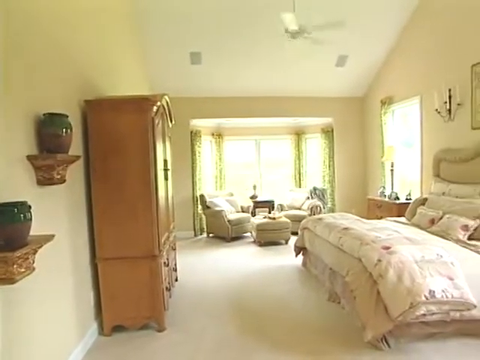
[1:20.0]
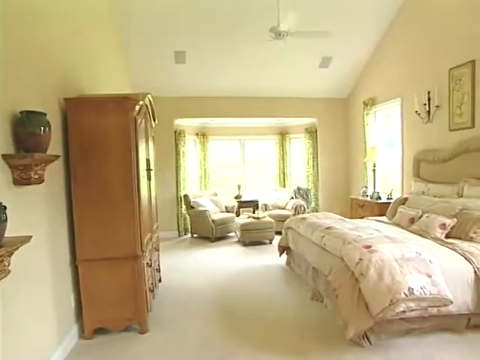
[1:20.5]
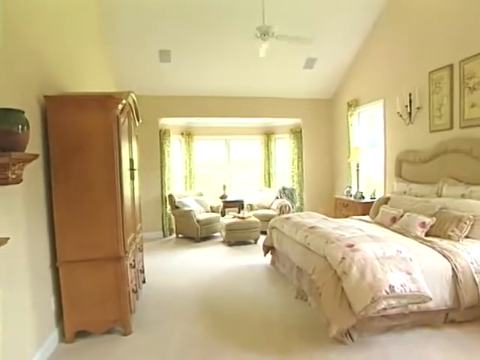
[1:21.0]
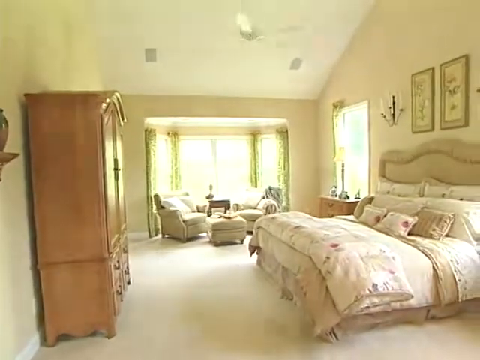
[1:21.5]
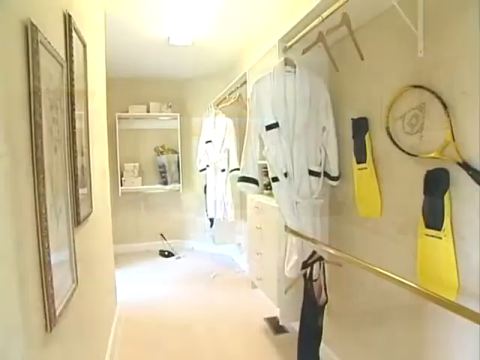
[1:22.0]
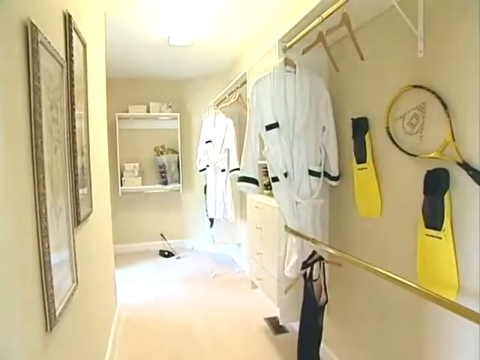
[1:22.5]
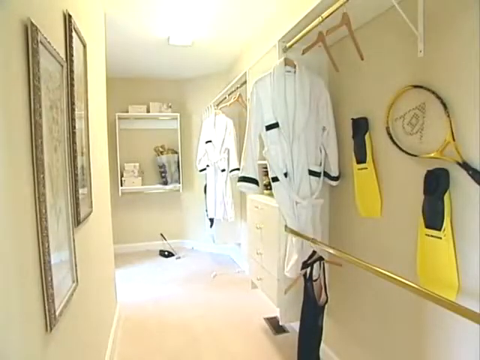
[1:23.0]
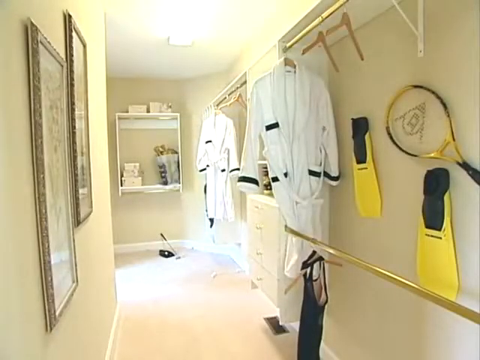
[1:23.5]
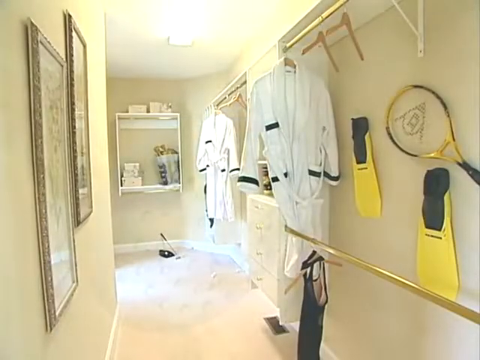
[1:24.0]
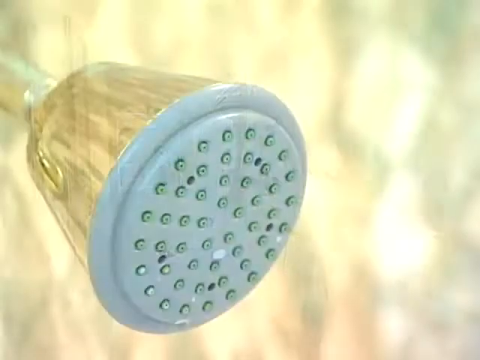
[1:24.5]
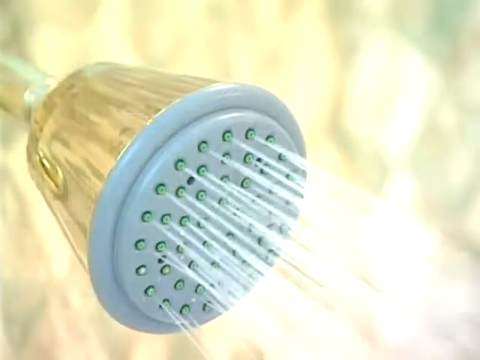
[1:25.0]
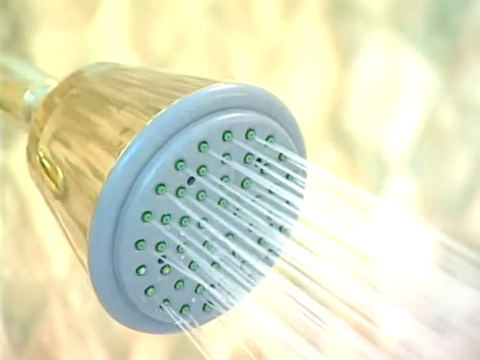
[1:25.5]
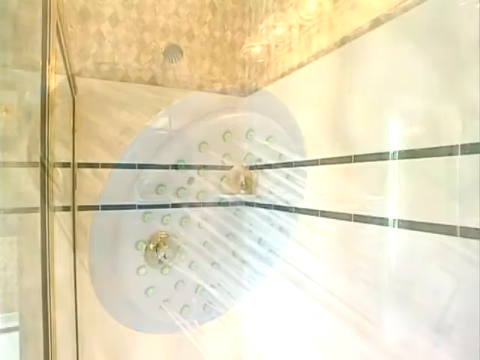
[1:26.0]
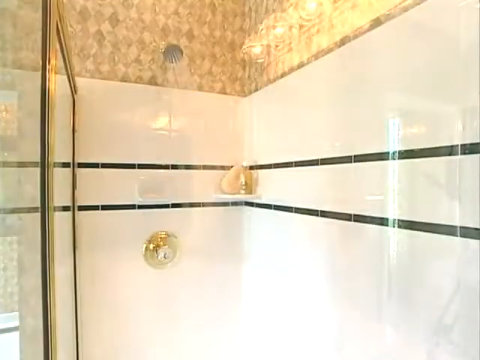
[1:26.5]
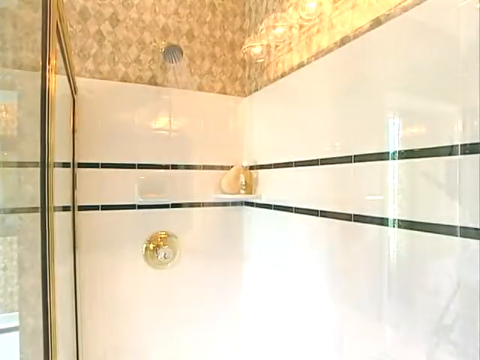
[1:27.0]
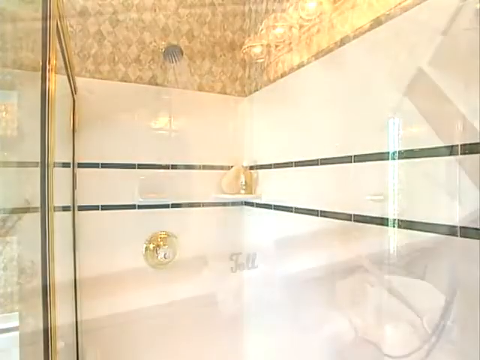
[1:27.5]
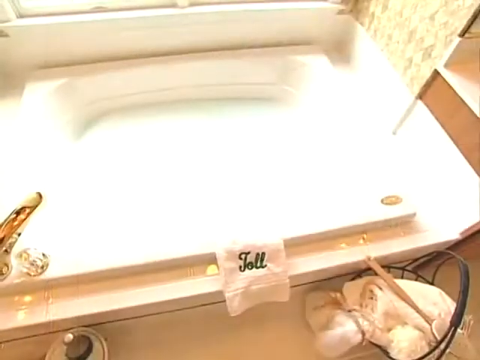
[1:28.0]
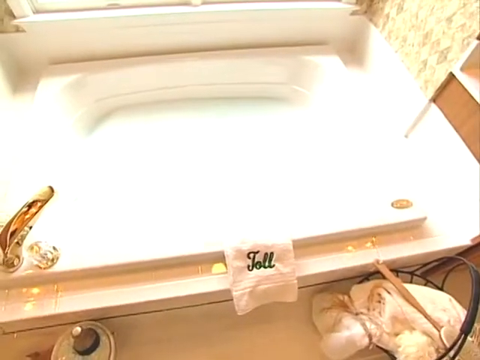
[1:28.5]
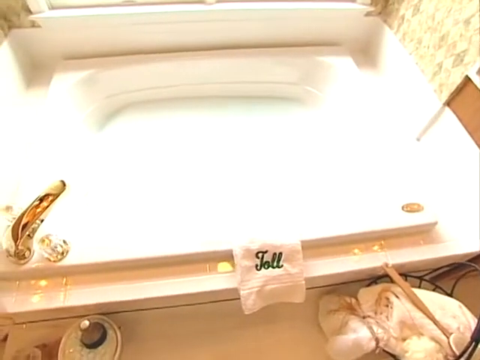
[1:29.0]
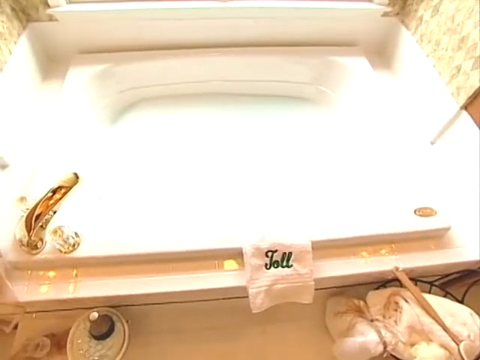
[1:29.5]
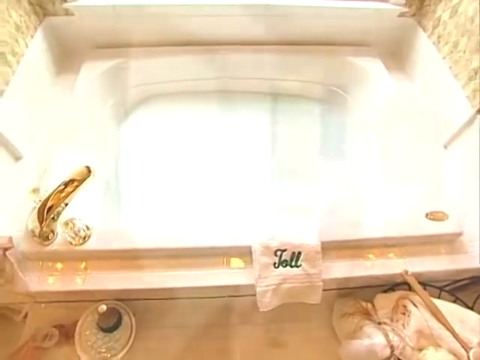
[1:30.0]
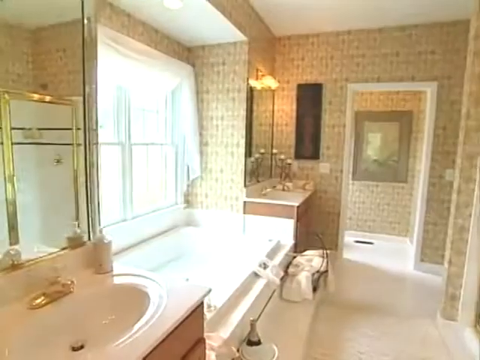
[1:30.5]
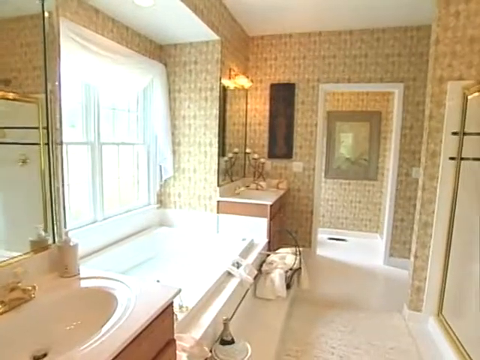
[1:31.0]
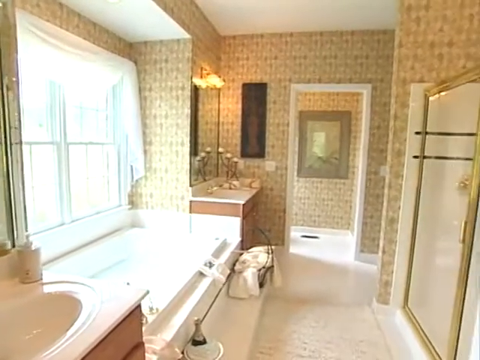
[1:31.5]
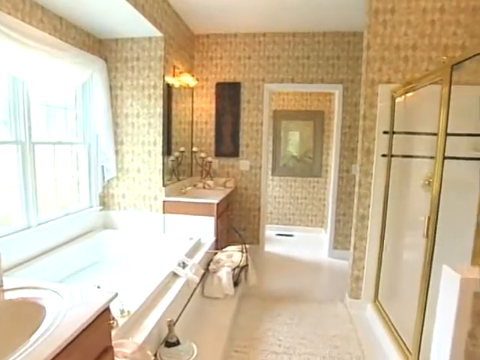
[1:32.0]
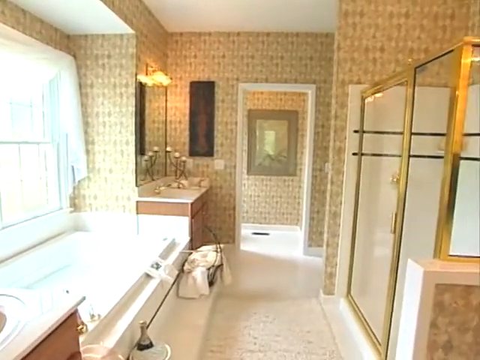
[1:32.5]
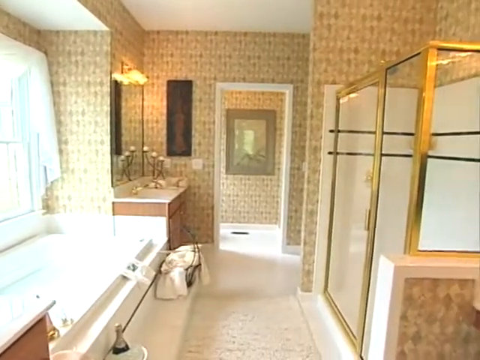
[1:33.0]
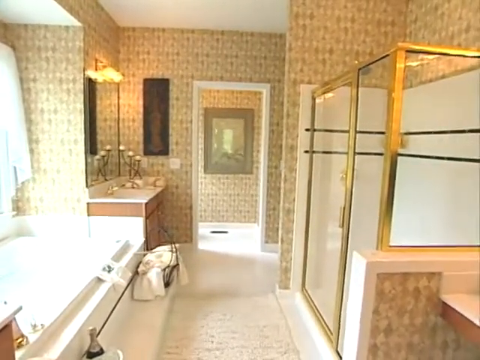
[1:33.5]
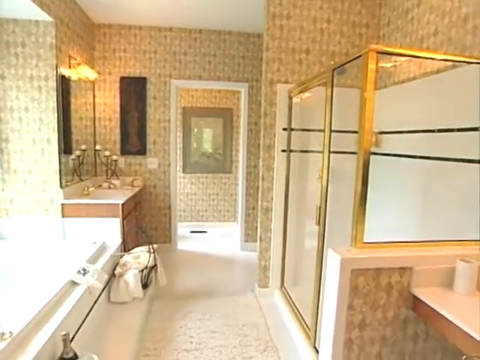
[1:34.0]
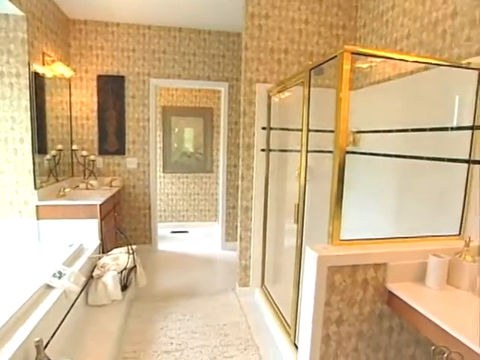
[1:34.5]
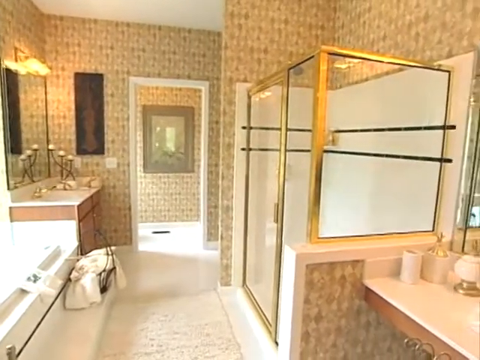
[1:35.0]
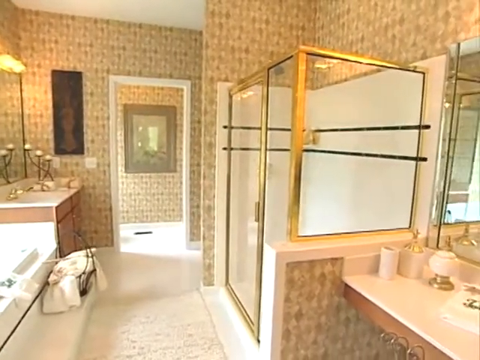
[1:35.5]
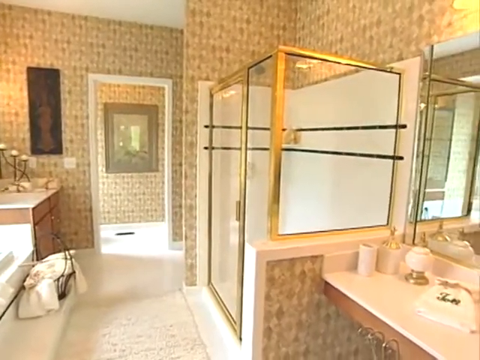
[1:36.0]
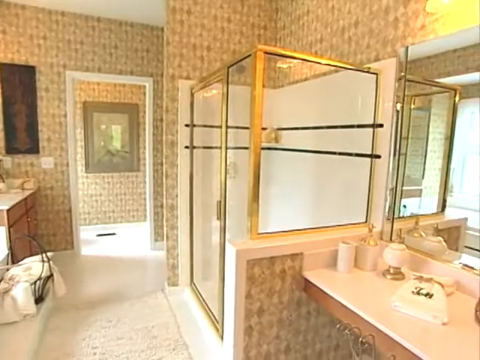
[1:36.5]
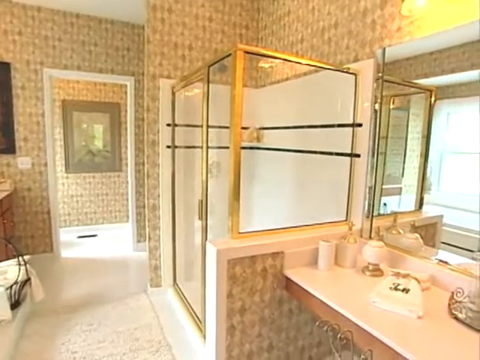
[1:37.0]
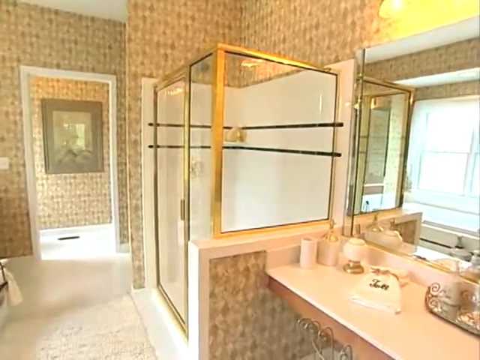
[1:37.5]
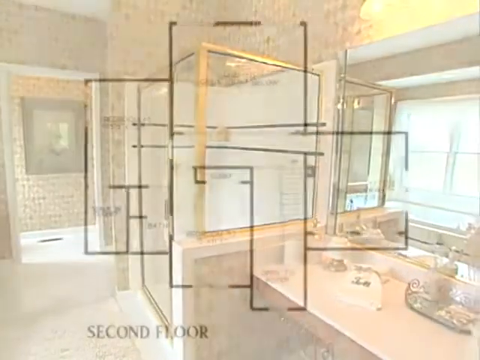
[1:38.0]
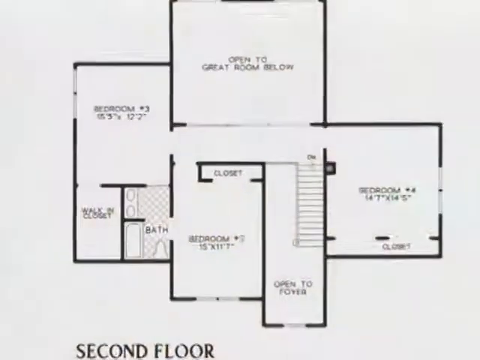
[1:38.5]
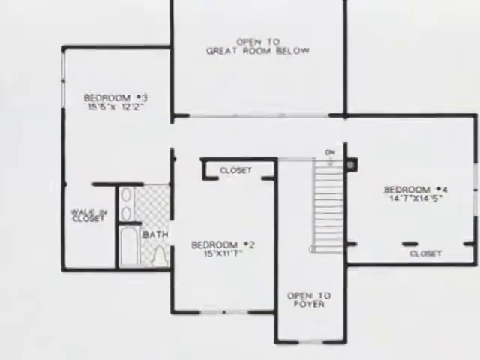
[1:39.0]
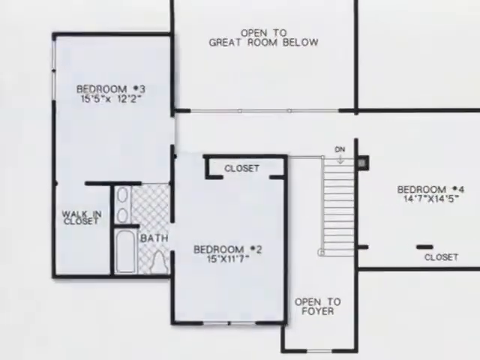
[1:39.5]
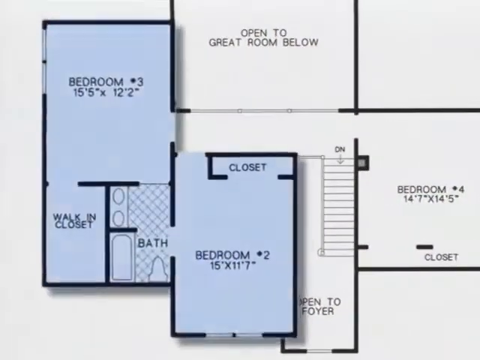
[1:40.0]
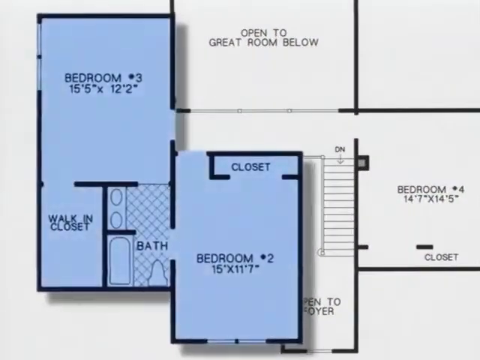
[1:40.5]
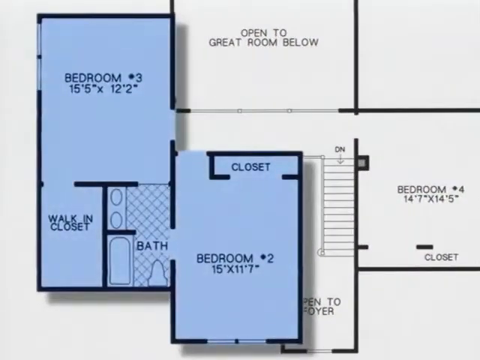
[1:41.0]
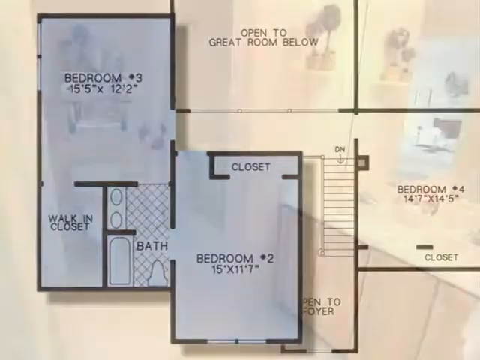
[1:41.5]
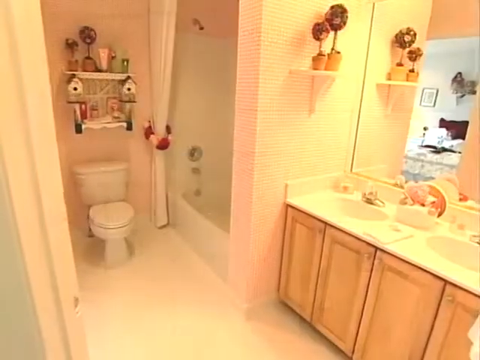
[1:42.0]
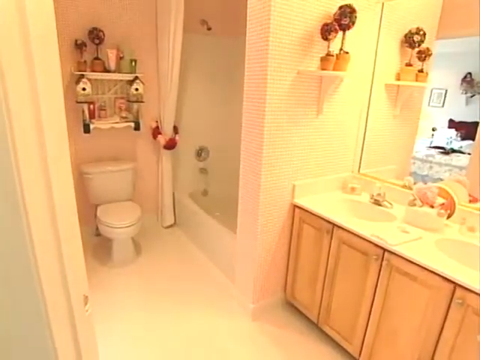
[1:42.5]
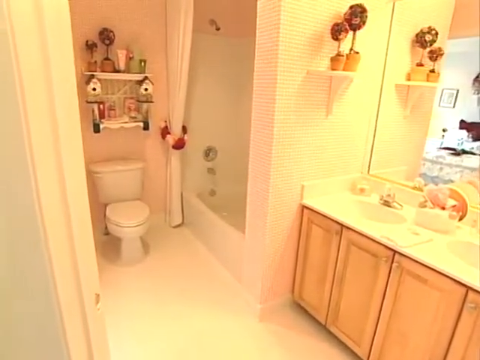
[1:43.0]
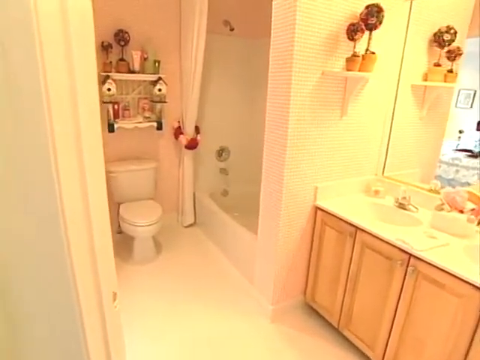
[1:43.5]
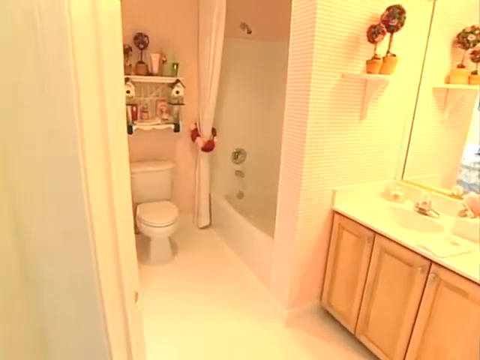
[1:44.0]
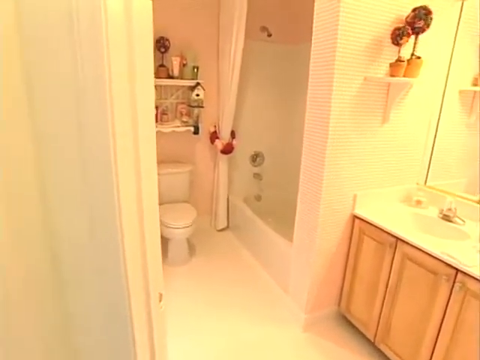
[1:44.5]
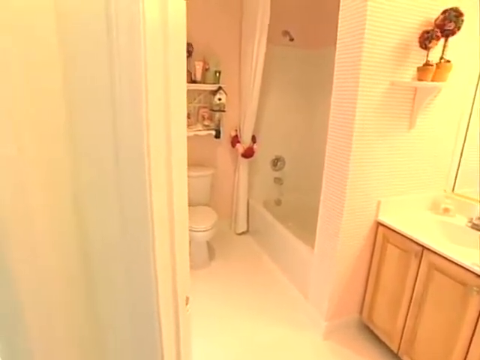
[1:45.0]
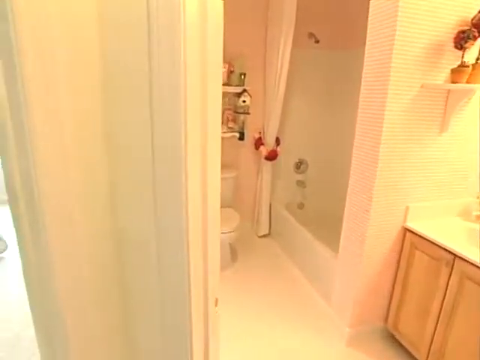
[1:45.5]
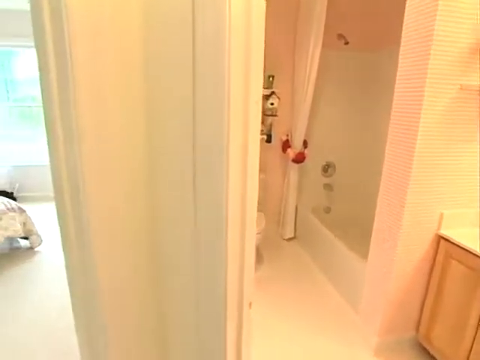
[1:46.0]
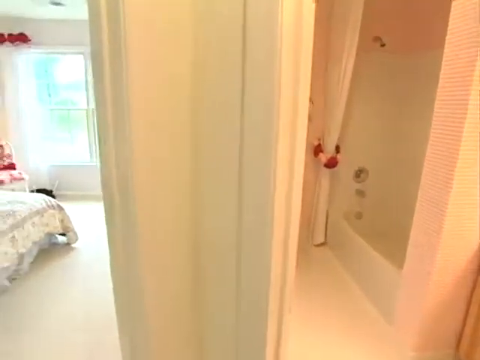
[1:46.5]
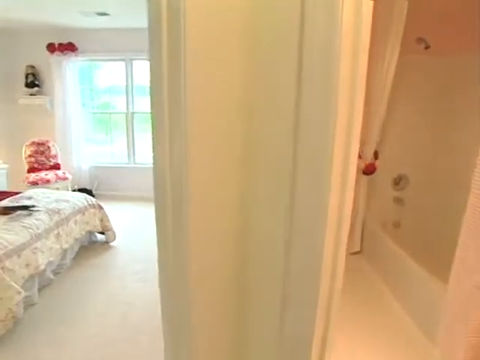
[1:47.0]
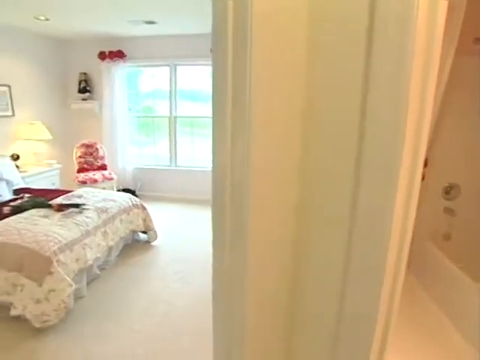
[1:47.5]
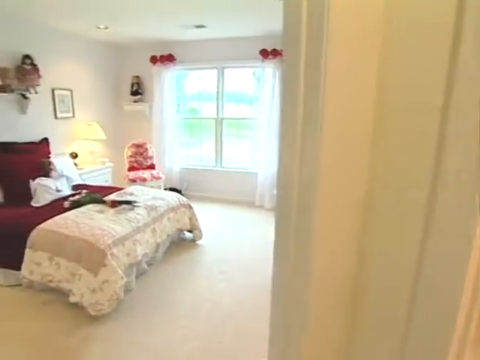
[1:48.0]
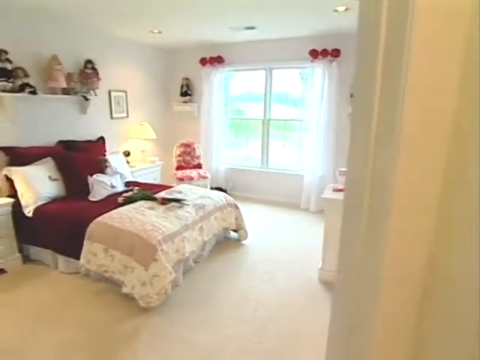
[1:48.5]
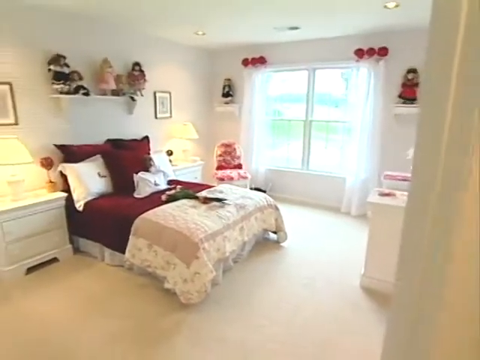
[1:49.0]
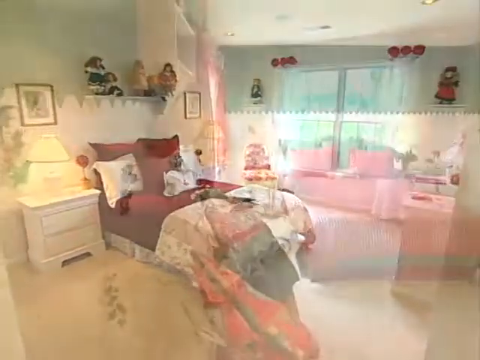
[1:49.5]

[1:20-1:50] A narrow area seems to have sporting equipment on the walls, including rackets and flippers, and what appear to be some judo uniforms, along with more framed pictures on the wall and some drawers. It appears to be a dressing room, but used for a few pieces of sports equipment. The camera zooms in to a shower head, which is turned on. The full shower comes into view: largely white tiled, with some different beigey coloured tiles above and some strips of black tiles in the centre, a gold frame on the shower window, gold fittings for the tap, and a small shelf in the corner. The focus moves to the bath, which has gold taps, and then the camera pans across the whole bathroom, showing the positions of the bath and the shower in the room. The floor plan appears, and a bedroom, a walk-in closet, a bath and a second bedroom with a closet all get larger and turn blue. A toilet is shown with some kind of decoration above it and another shelf to the right with another decoration that looks like small trees. There is a sink area with various cabinets and a shower with a shower curtain, along with a red and white portrait. The camera pans to the left to a bedroom that is largely white, with some red bedding, a few red objects above the curtains, and a doll wearing red on one of the shelves. Various dolls are on a shelf above the bed. A small red and white chair is next to the bed on the right, next to the window, which has quite thin curtains.